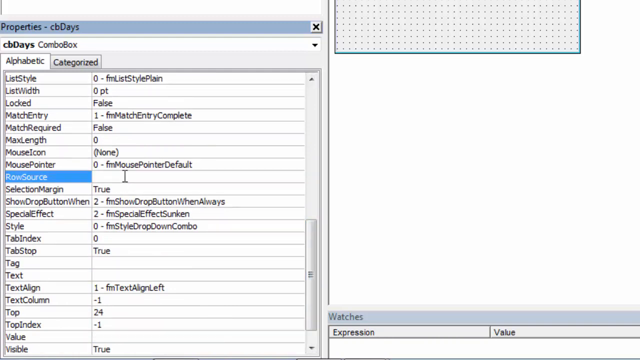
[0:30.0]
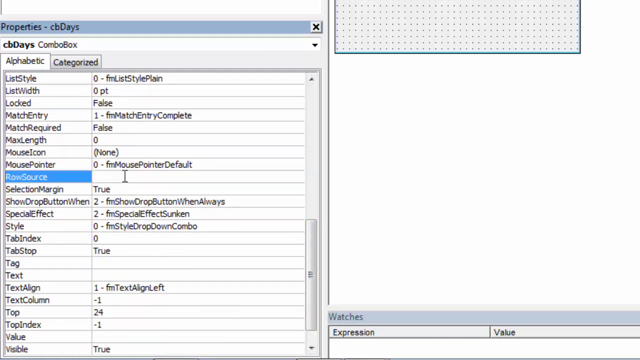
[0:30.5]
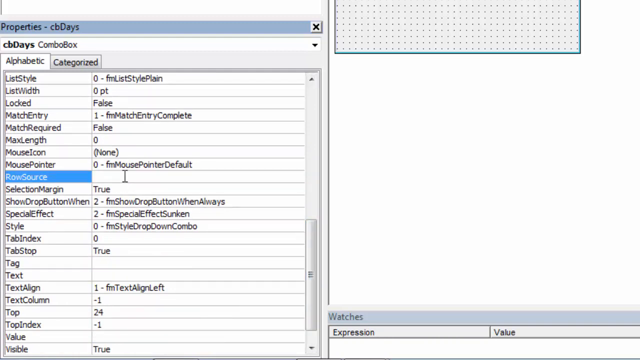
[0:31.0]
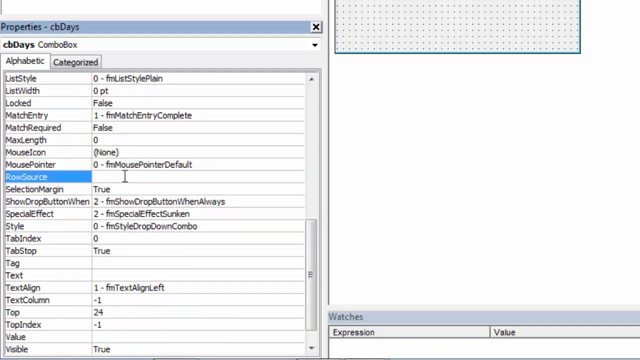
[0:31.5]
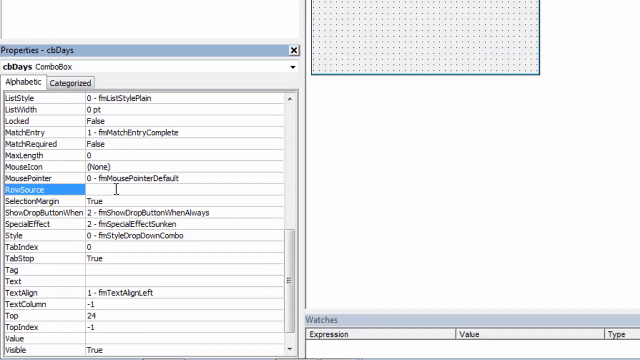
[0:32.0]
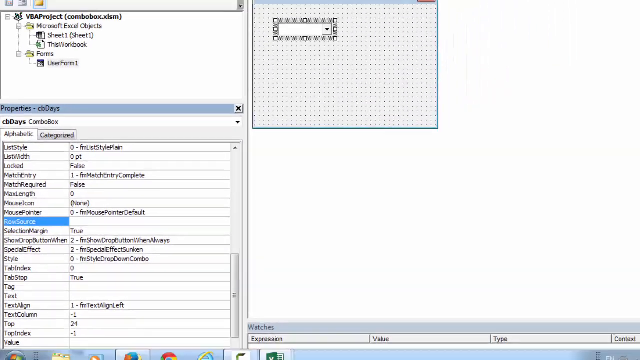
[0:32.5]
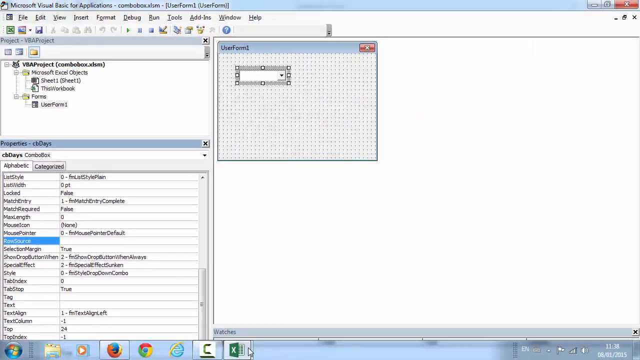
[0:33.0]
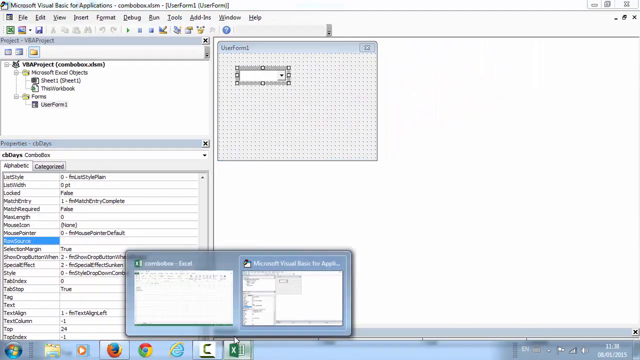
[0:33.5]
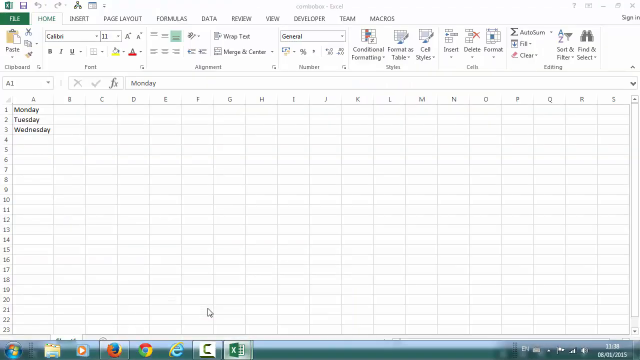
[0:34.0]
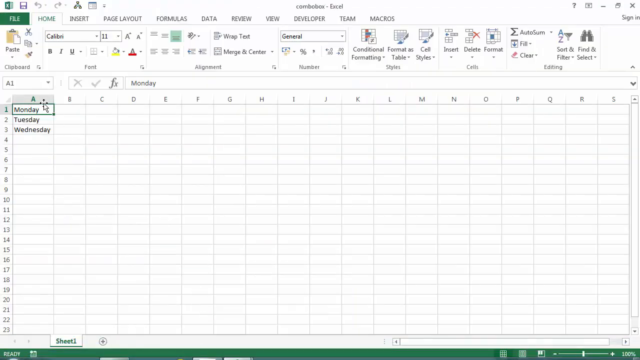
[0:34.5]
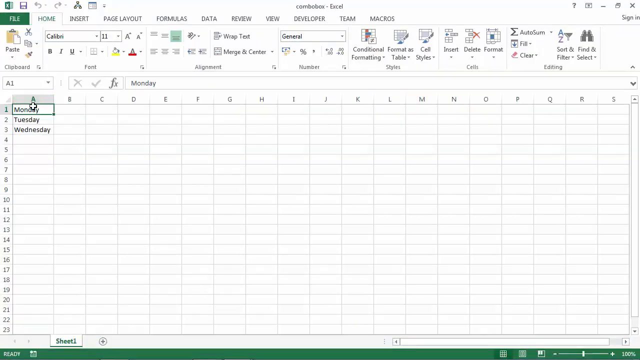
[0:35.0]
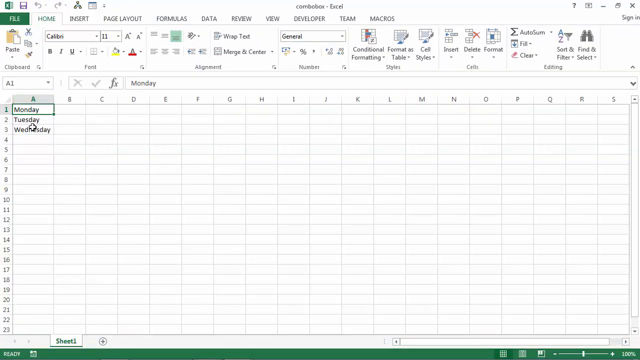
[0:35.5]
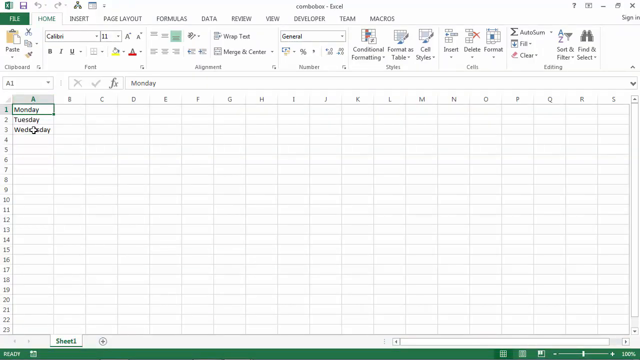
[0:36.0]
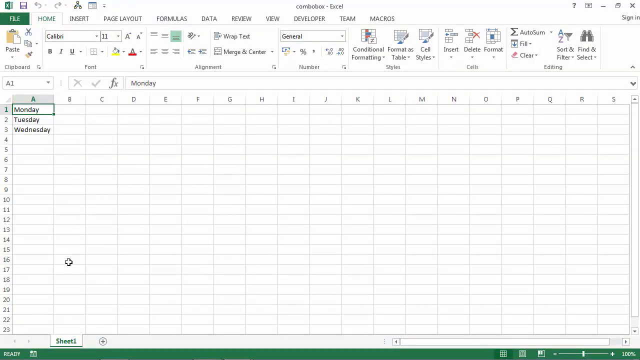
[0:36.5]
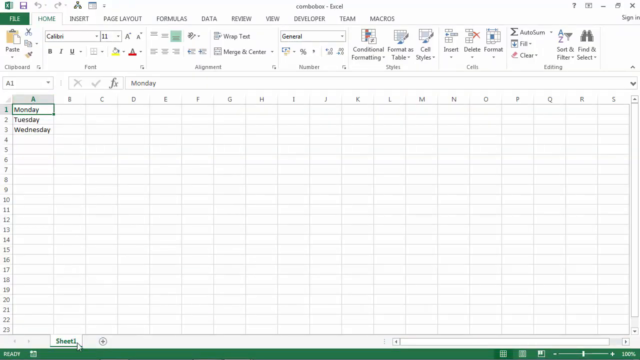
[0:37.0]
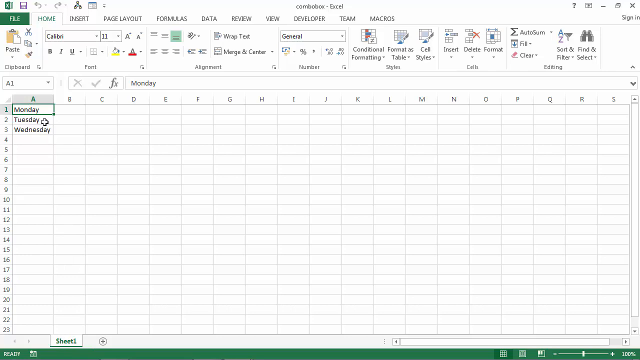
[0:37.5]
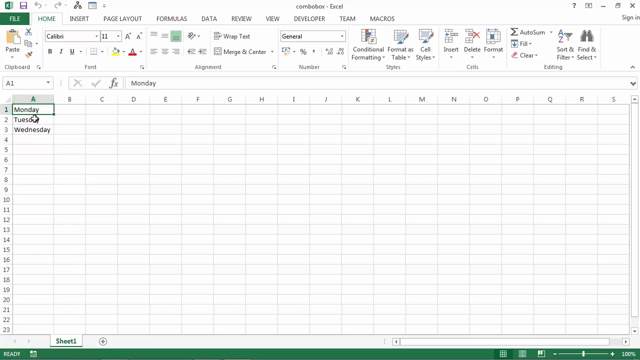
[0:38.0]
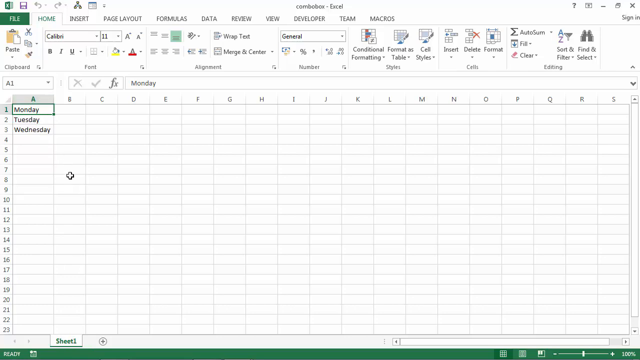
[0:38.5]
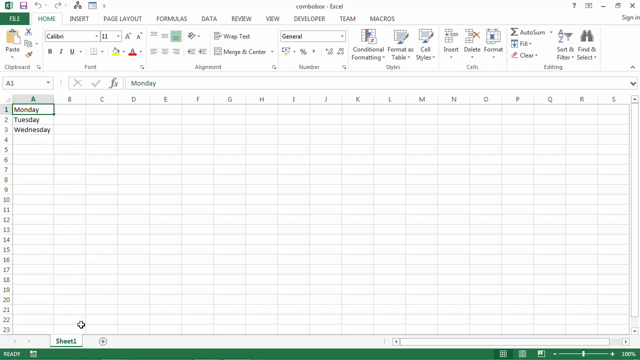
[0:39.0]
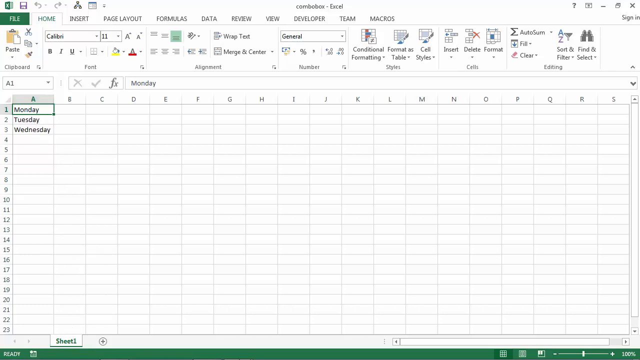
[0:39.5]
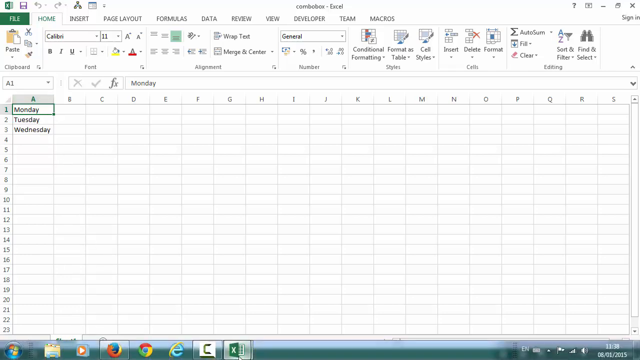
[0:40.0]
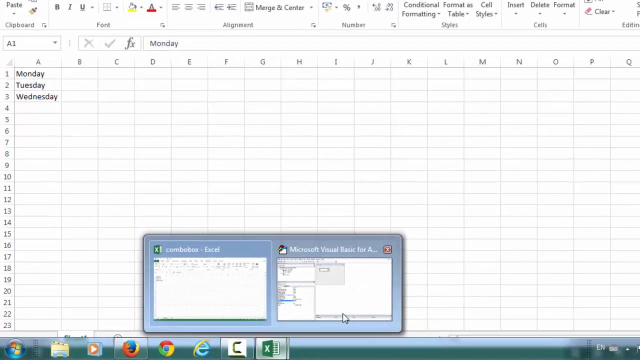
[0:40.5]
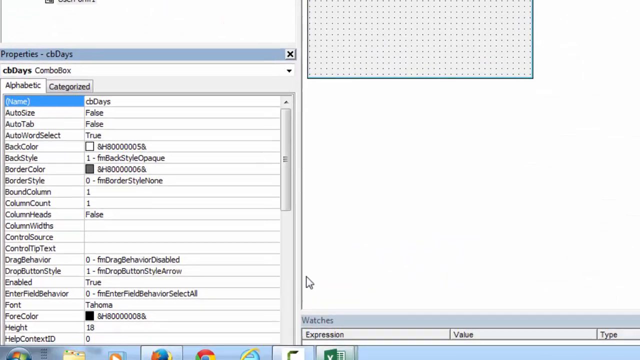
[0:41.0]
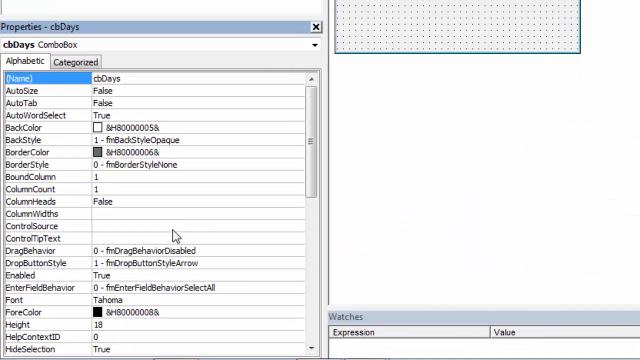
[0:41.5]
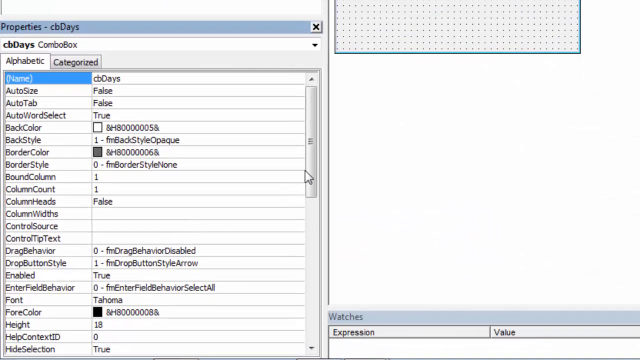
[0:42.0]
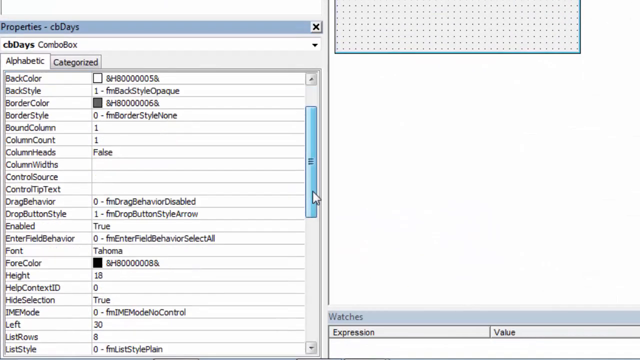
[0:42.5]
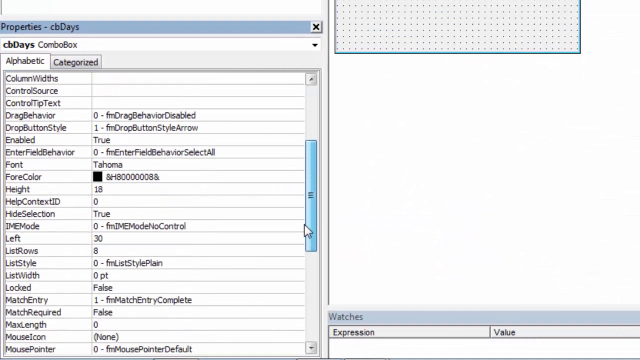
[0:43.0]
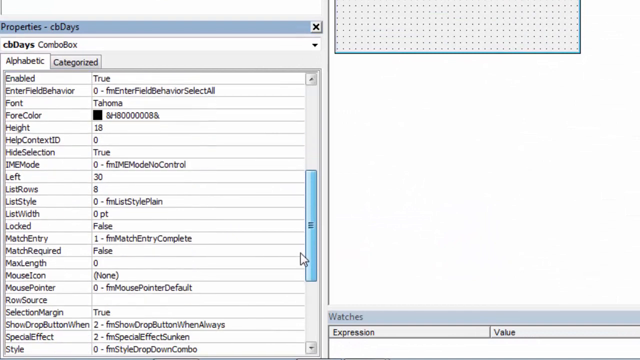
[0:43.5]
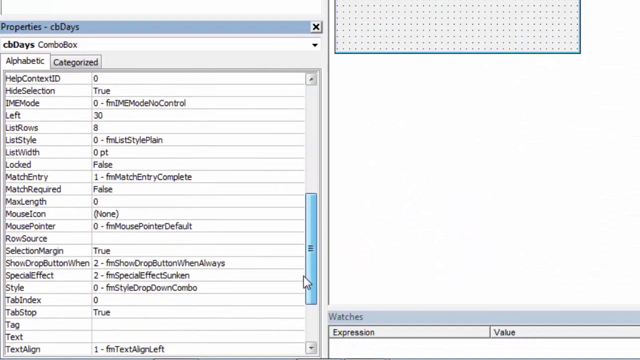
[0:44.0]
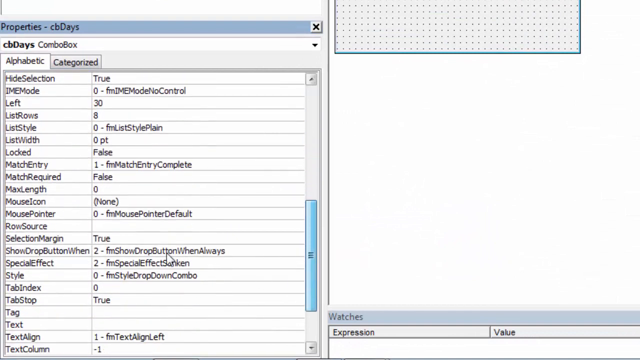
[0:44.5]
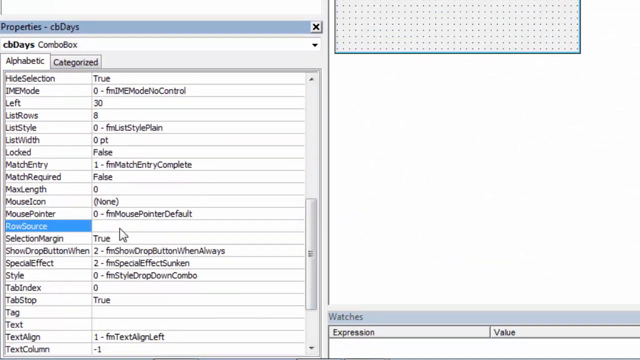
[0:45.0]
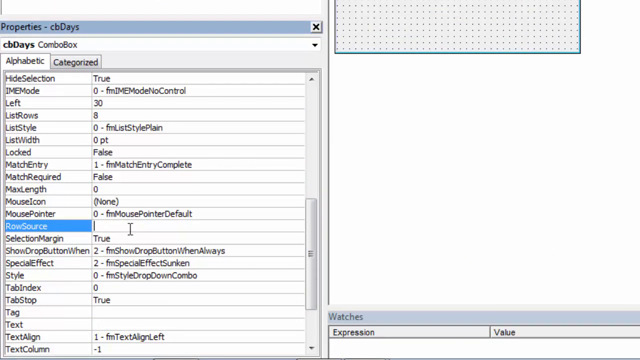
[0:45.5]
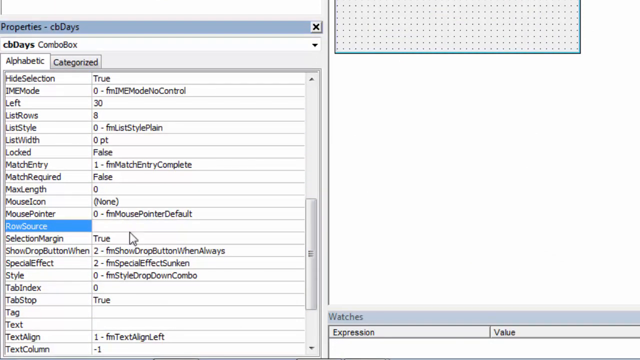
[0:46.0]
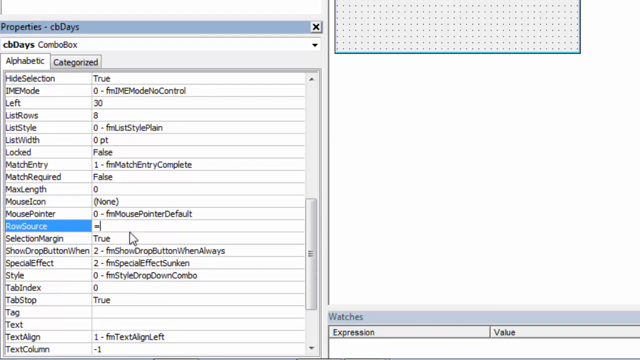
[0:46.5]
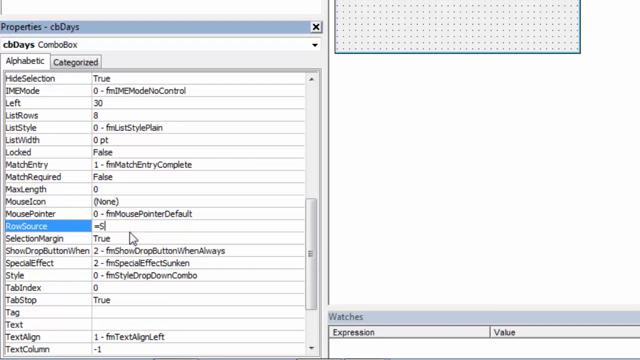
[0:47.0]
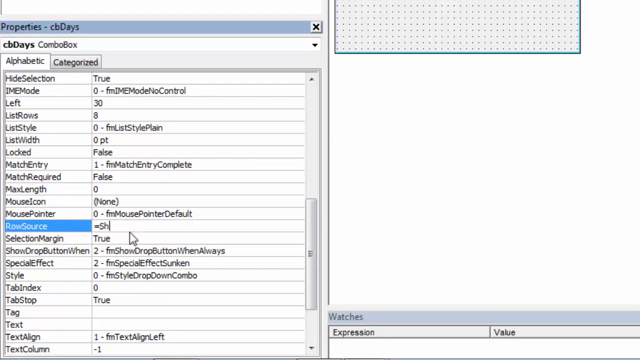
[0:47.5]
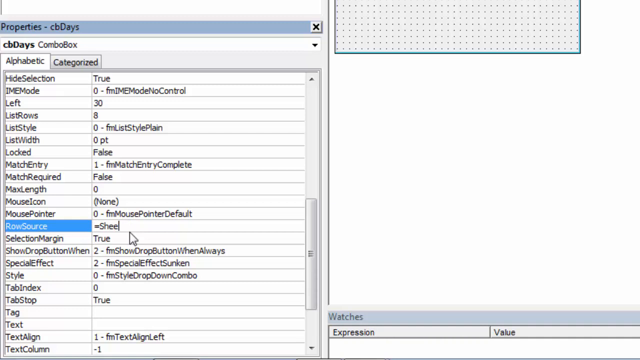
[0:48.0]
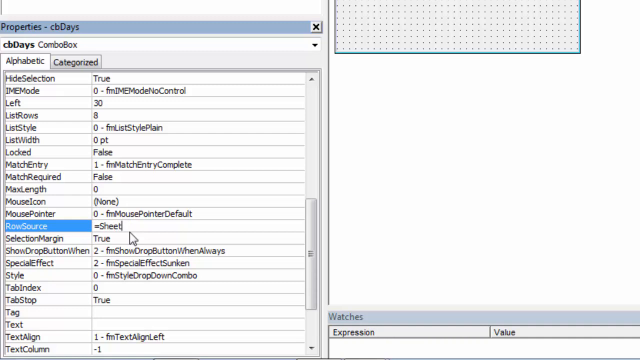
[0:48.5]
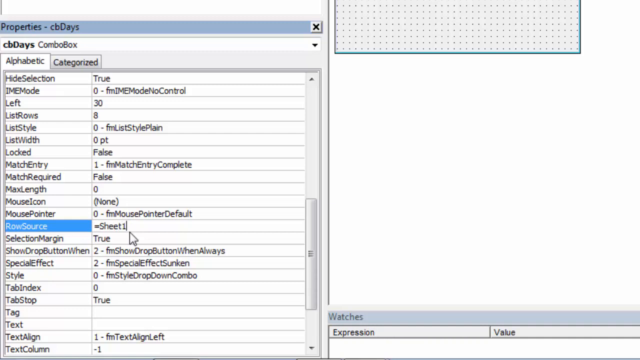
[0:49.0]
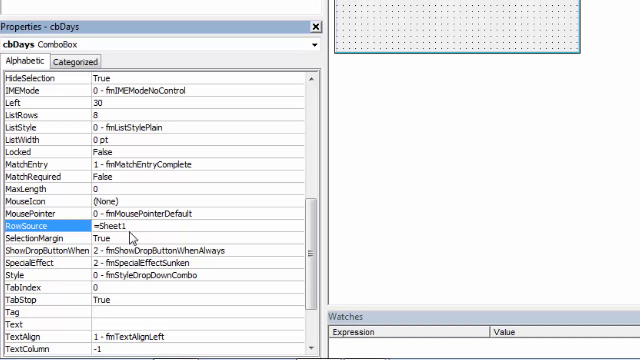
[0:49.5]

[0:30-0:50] The view zooms in and out and returns to the spreadsheet. The user scrolls down again, picks Resource and types in code, apparently "sheet one". He enters a formula, equal to Sheet 1. The video is probably teaching how to do a particular task in Excel. A long list of items is shown, including Alphabet and Categorized, List Style, Lists, Locked, Match Entry, Match Required, Max Length, Mouse Icon, Mouse Pointer, Resource, Selection Margin, Visible Value, Top Index, Top Text Column, Text Align, Text Tag, Top Stop, Style and Special Effects.